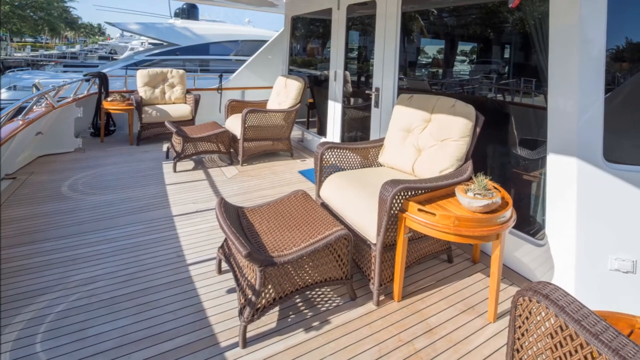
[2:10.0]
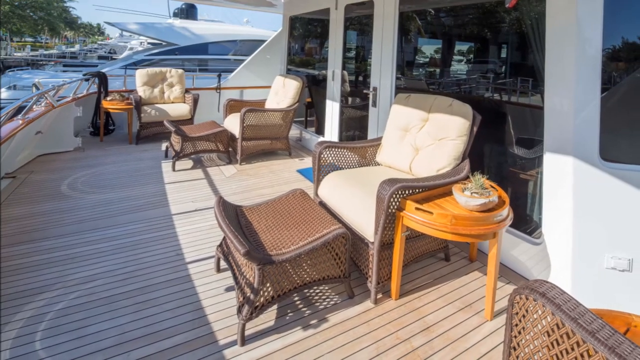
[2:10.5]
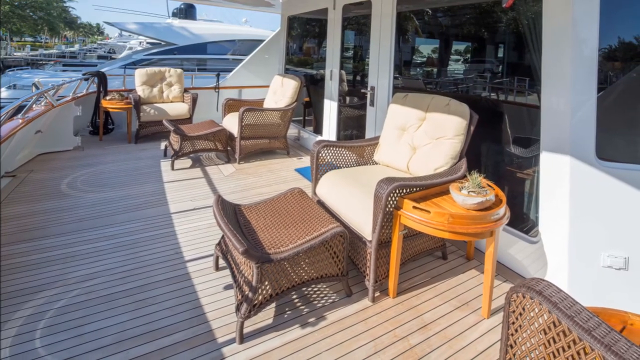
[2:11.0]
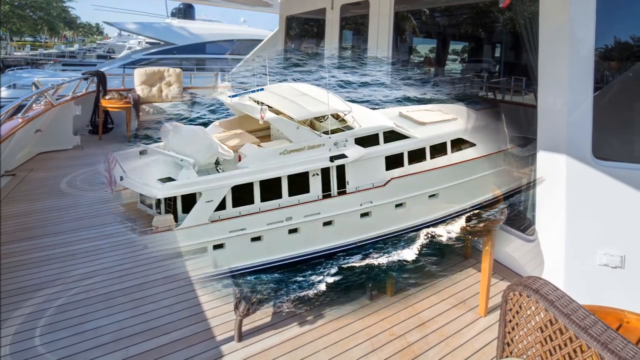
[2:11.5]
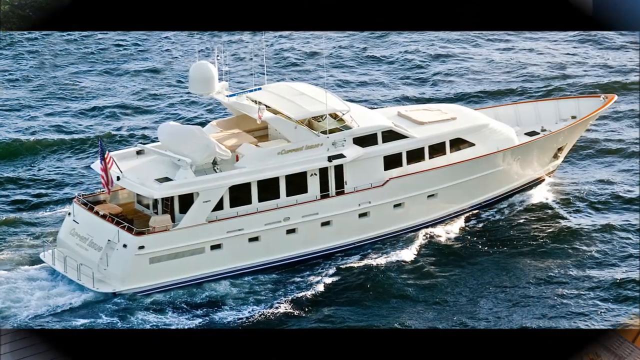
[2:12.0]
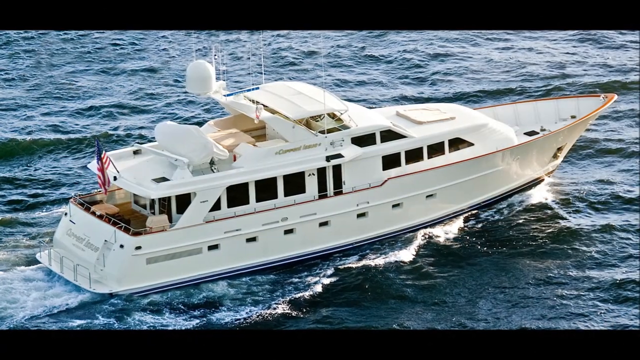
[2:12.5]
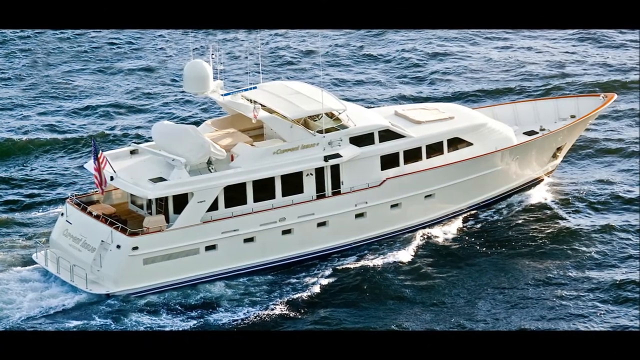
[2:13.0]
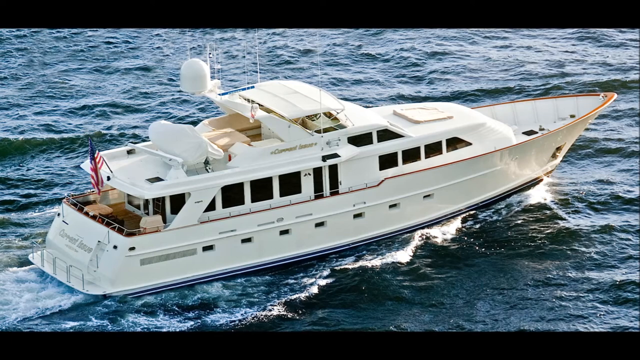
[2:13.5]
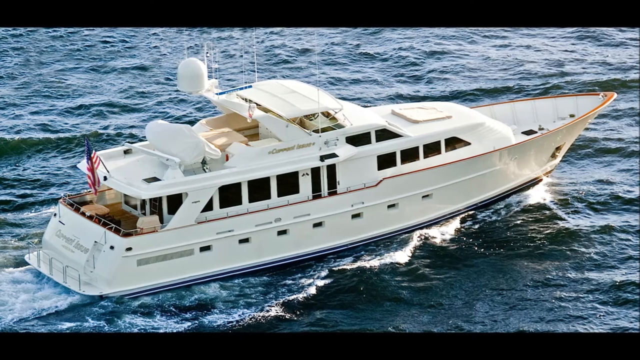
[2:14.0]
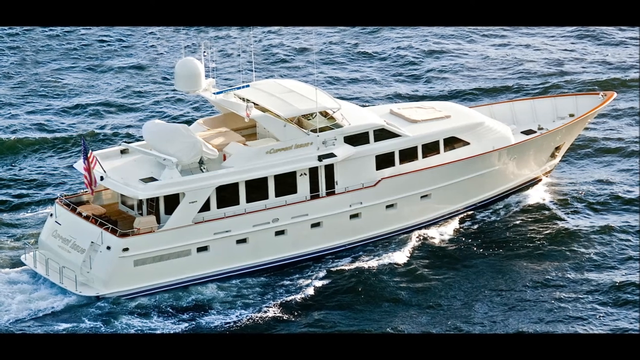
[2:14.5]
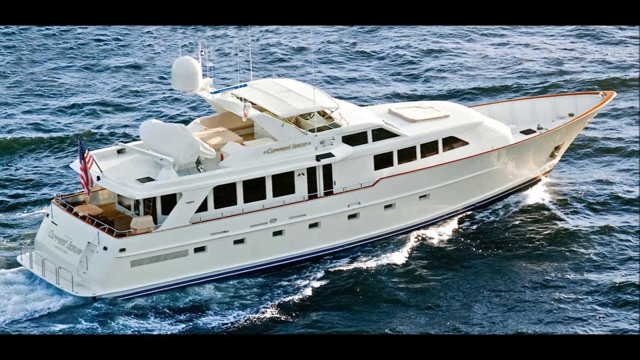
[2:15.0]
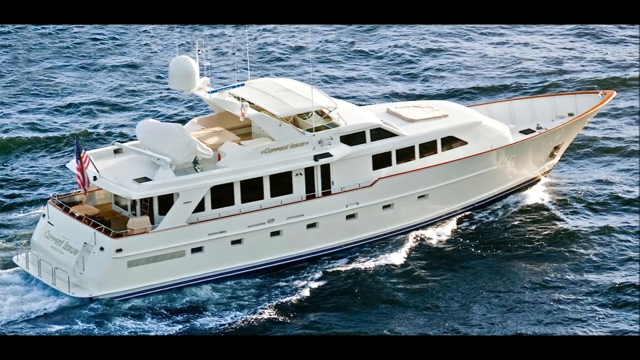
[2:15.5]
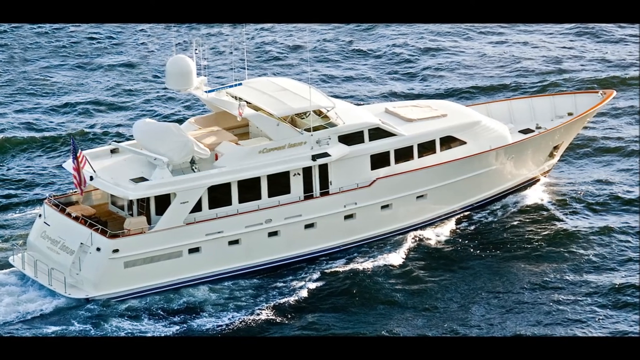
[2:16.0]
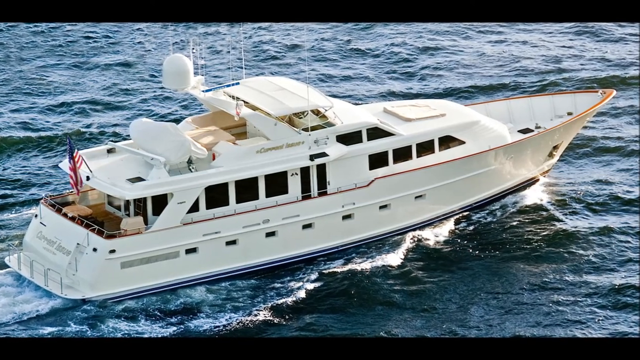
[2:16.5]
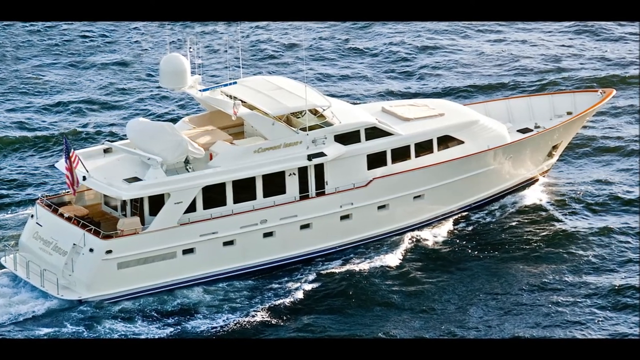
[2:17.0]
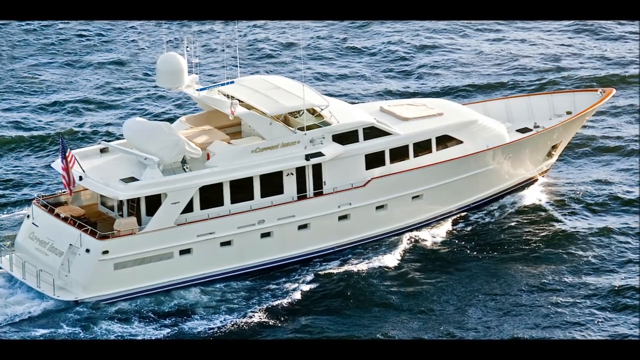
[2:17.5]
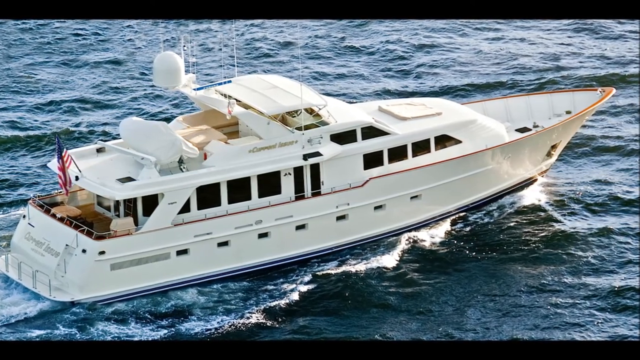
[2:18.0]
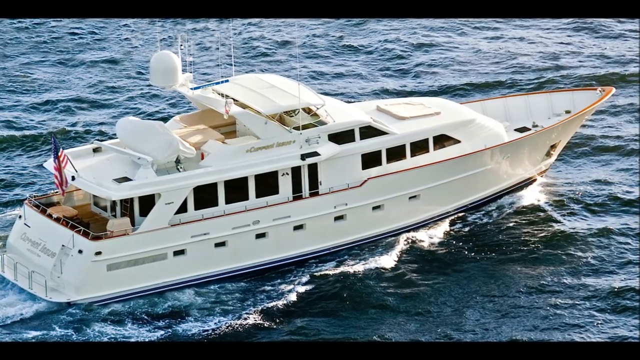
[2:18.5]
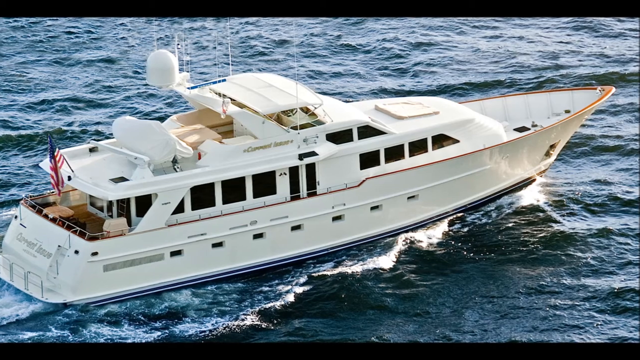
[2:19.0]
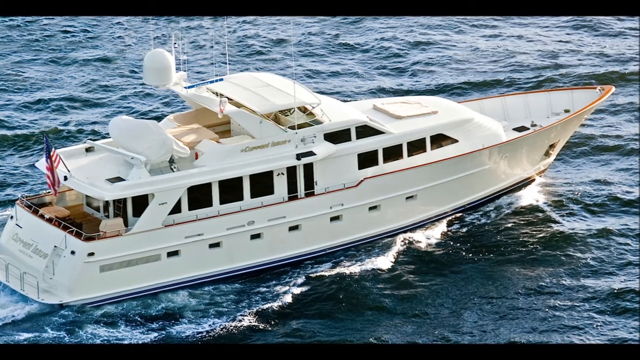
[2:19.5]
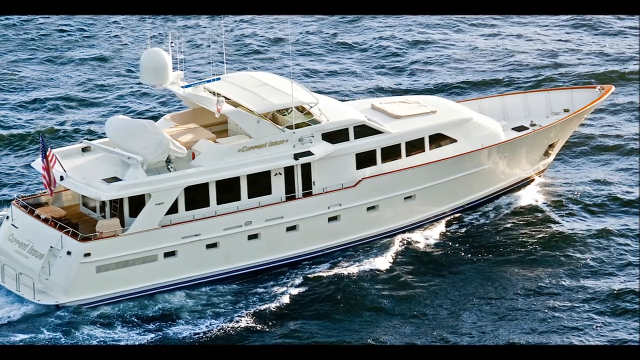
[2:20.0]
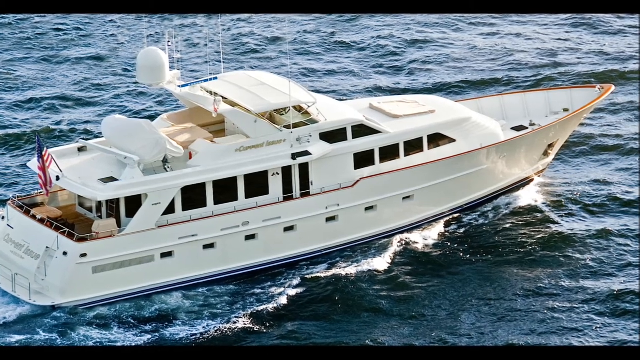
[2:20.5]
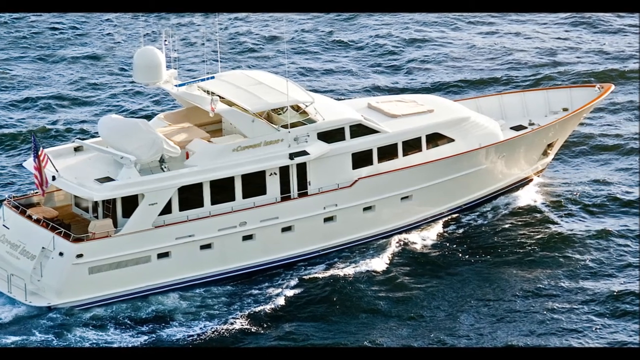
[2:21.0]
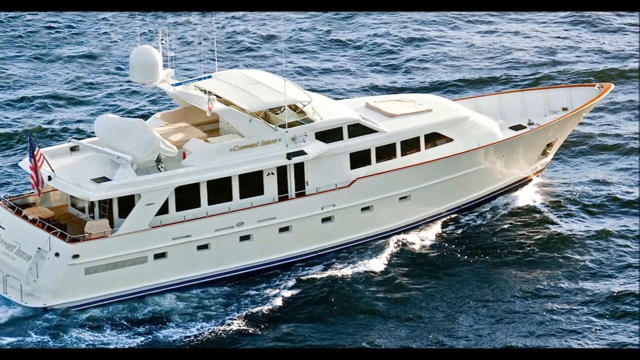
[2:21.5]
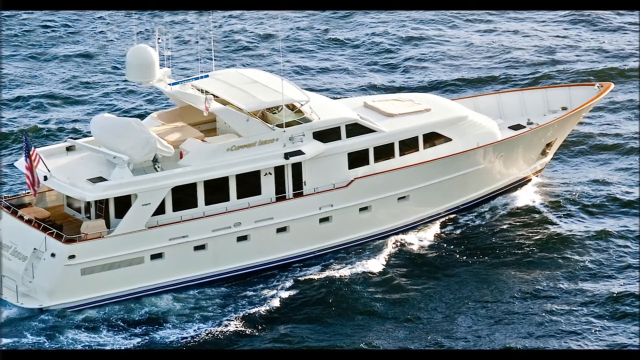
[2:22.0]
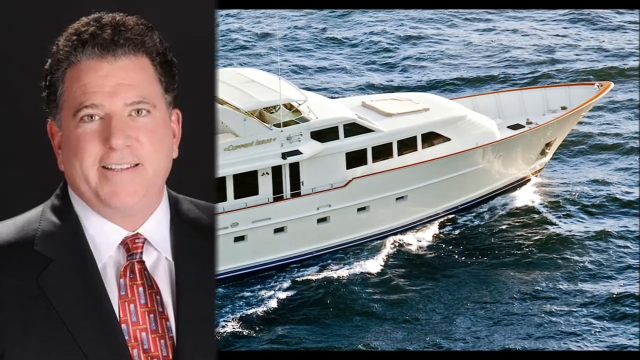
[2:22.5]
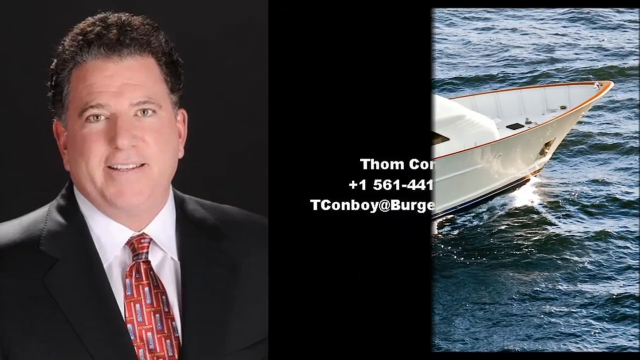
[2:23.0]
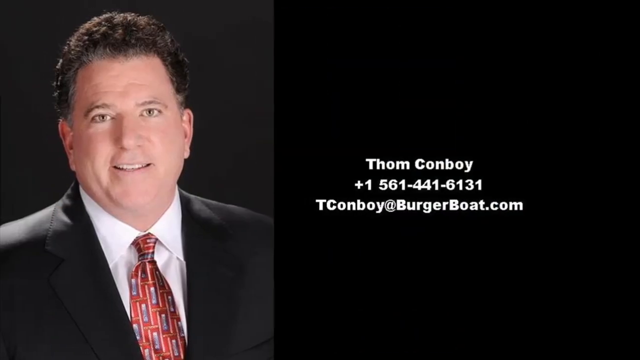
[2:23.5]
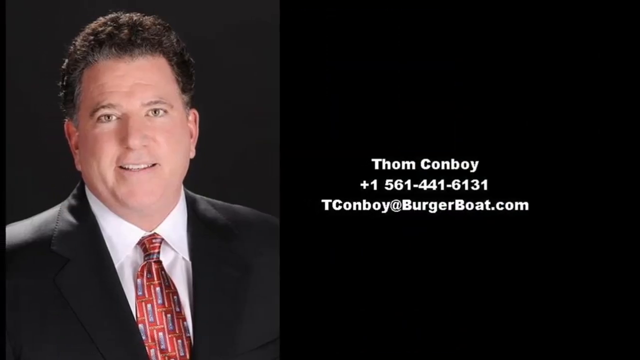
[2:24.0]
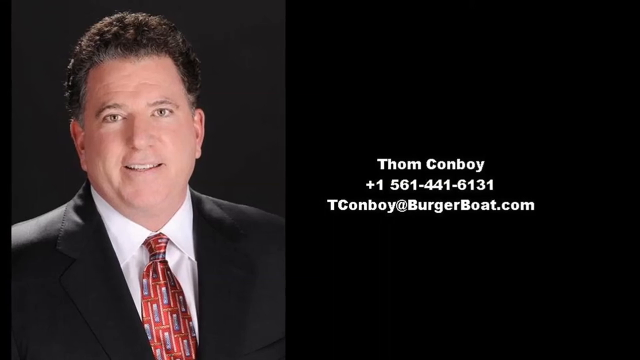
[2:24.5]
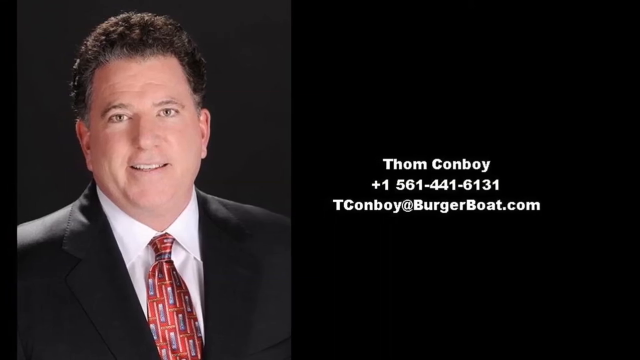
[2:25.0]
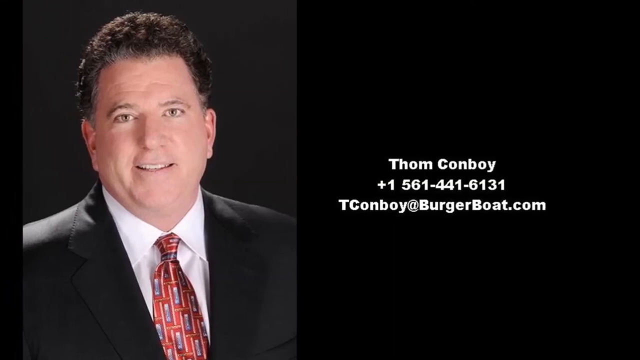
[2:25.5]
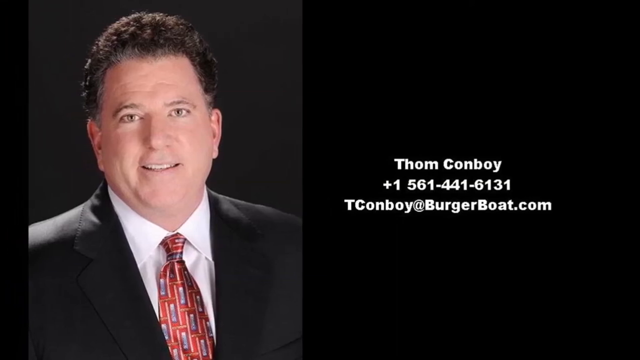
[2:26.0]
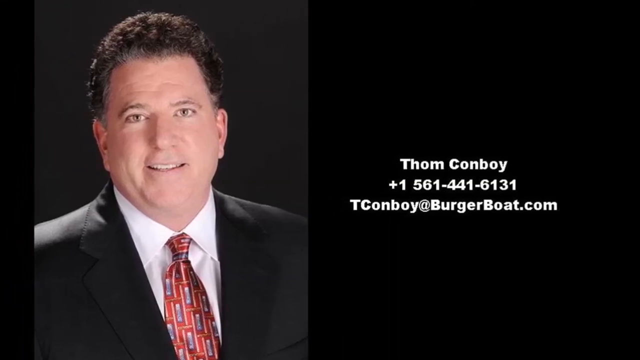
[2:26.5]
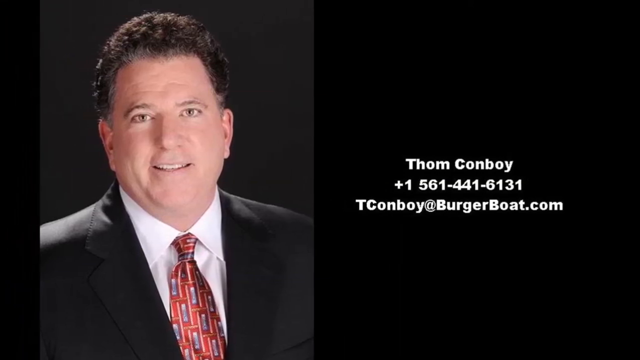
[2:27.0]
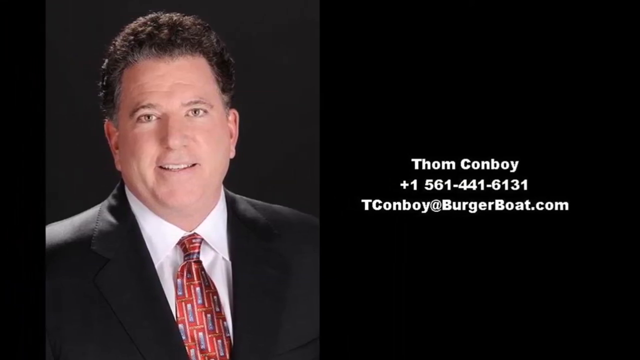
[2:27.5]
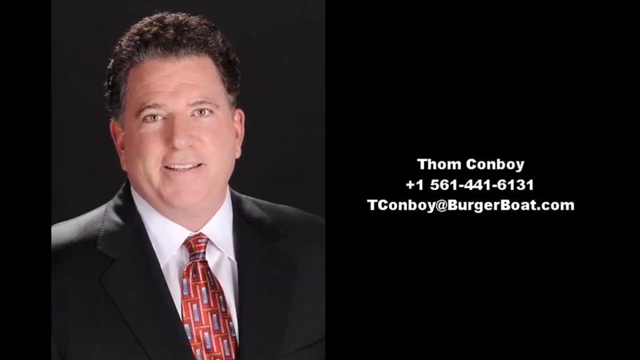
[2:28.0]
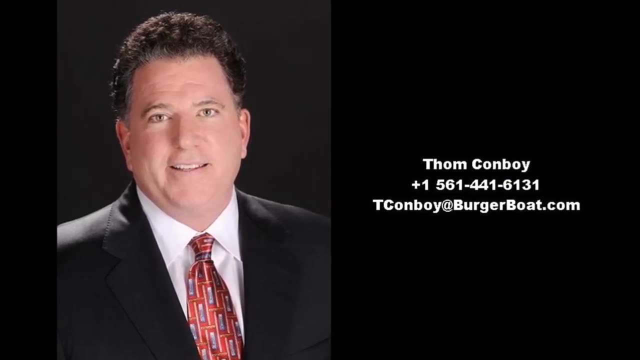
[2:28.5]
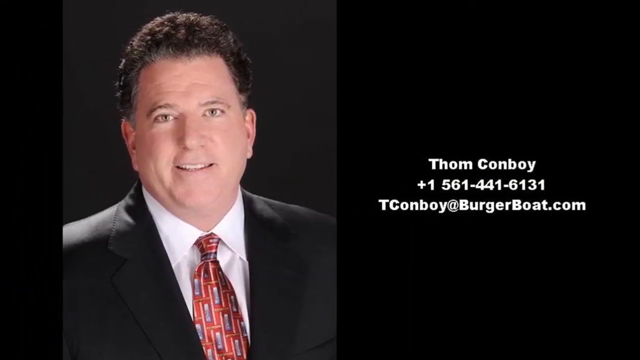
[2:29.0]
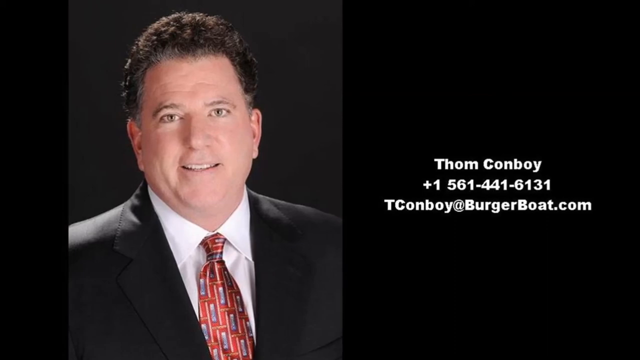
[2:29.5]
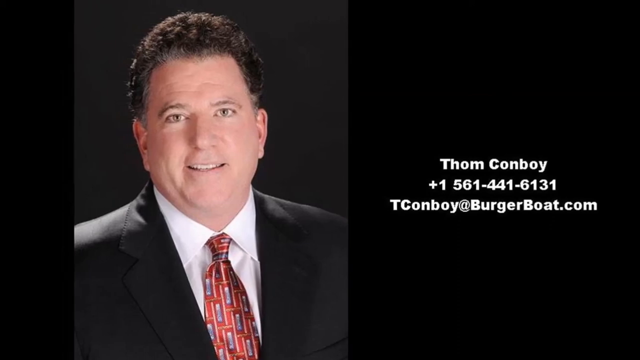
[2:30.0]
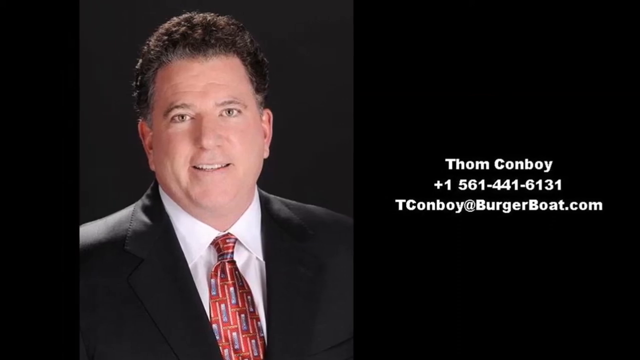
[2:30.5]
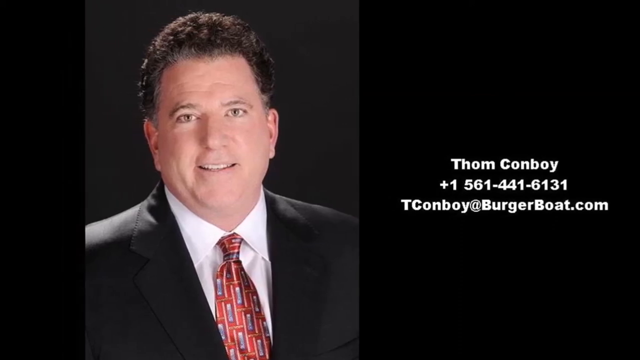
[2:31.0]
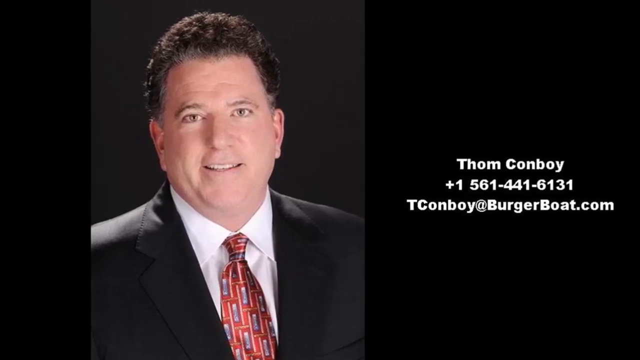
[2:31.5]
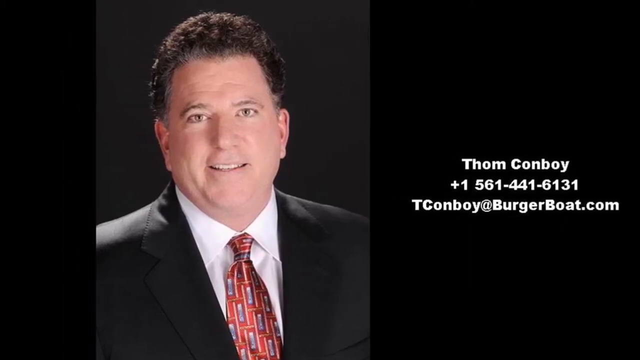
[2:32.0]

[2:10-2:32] A full shot of the yacht is shown; it has three bedrooms, three bathrooms, a rear deck and a salon at the top, and is very roomy inside. The picture is in motion, and the camera zooms in on the boat. Next, the contact person for information about the boat is shown: Thom Conboy, with a telephone number, 561 441 6131, and an email address, tconboy@burgerboat.com. In a professional headshot, he looks like a middle-aged man with curly hair and a somewhat round face, wearing a suit and tie with a white dress shirt underneath.